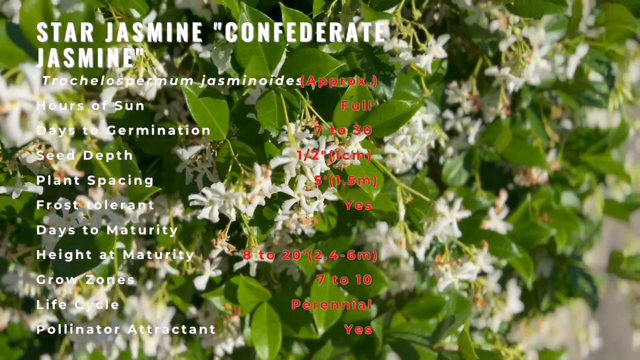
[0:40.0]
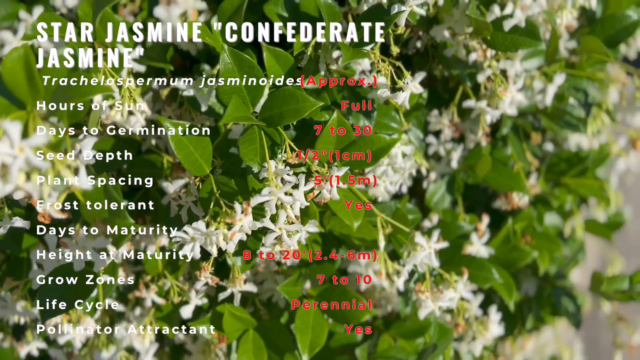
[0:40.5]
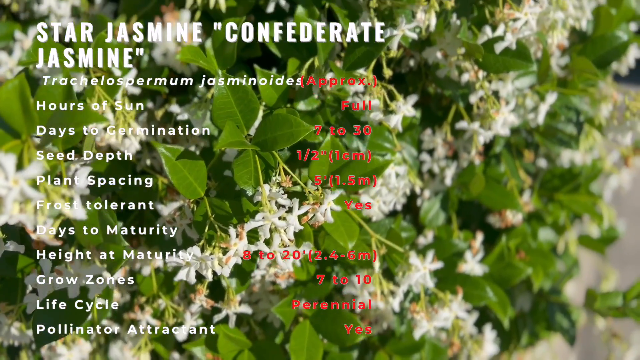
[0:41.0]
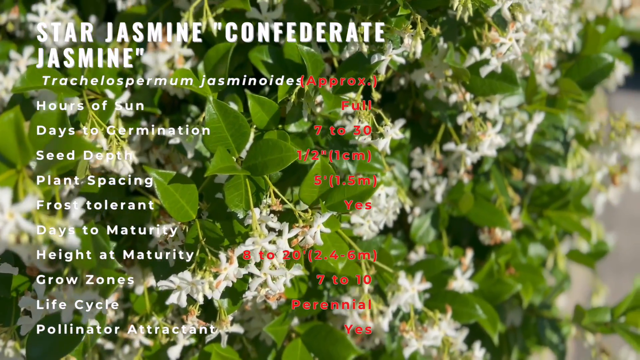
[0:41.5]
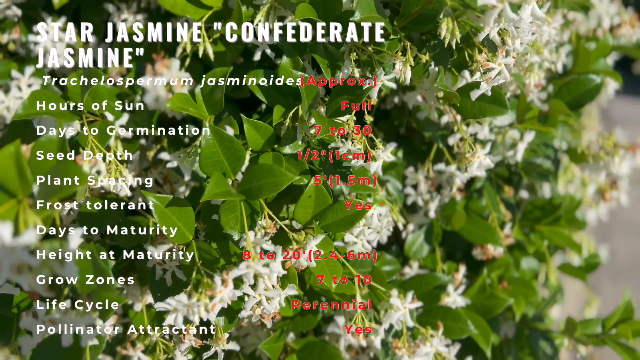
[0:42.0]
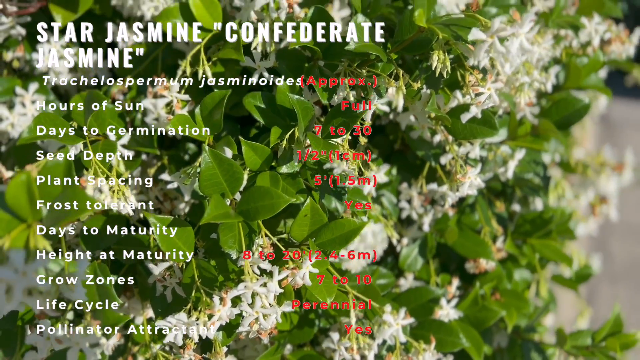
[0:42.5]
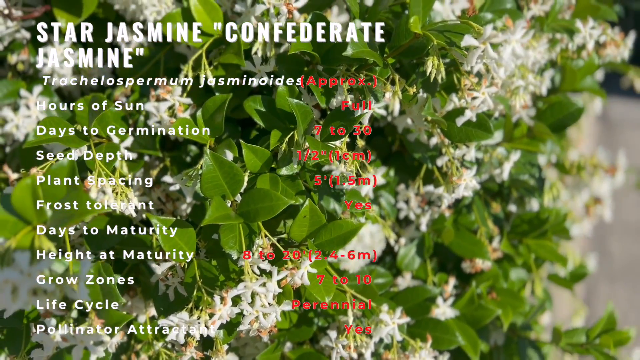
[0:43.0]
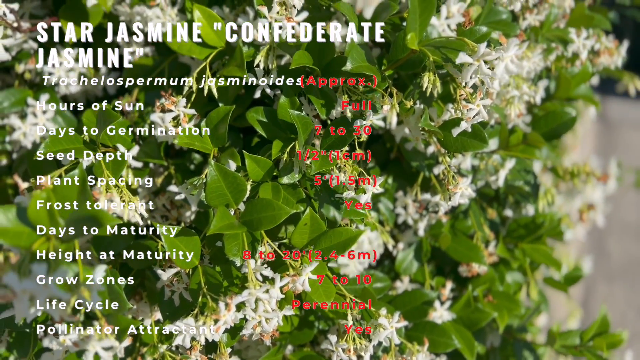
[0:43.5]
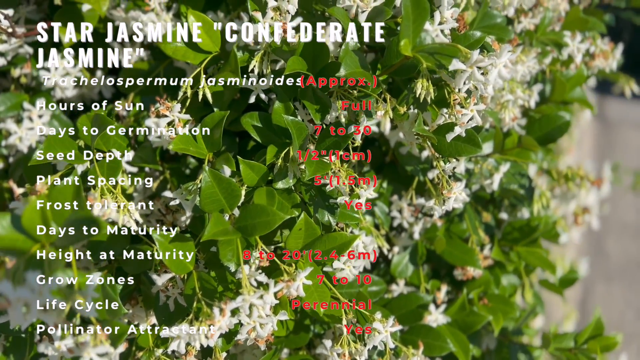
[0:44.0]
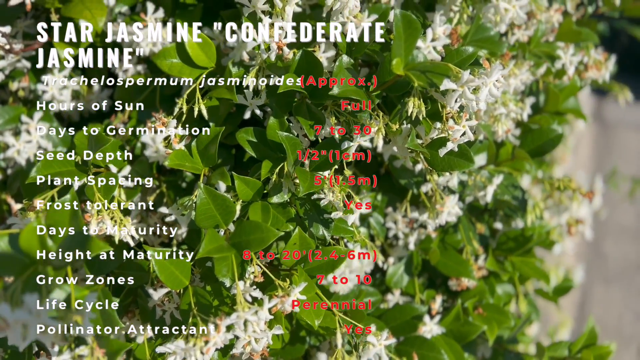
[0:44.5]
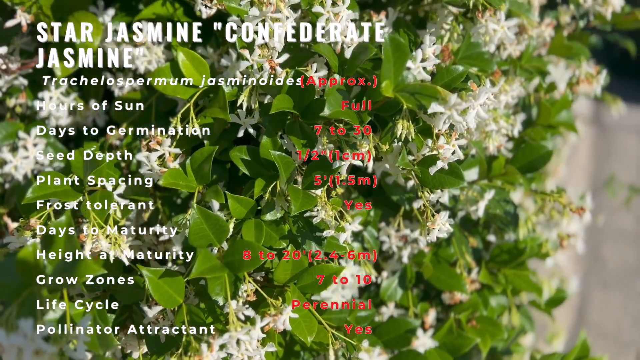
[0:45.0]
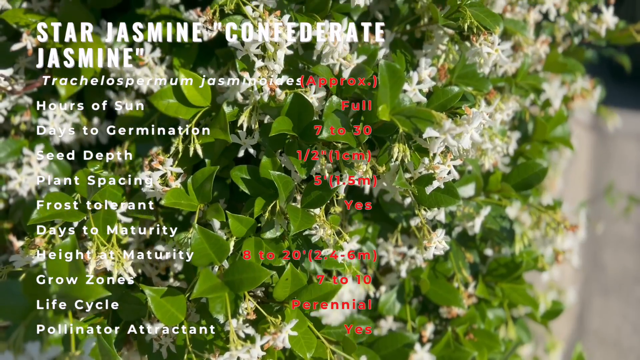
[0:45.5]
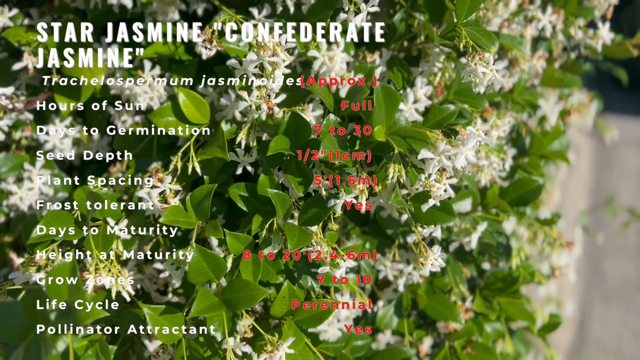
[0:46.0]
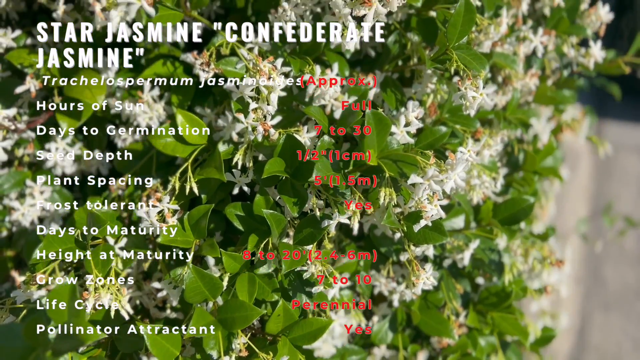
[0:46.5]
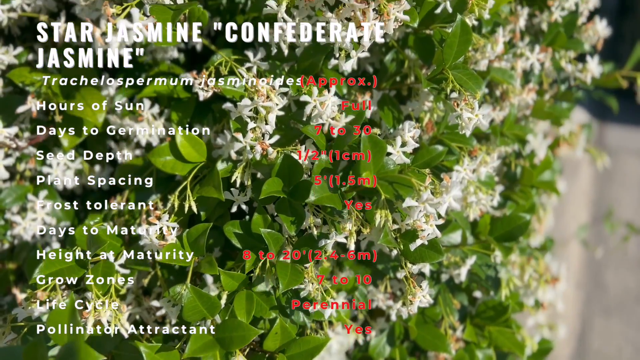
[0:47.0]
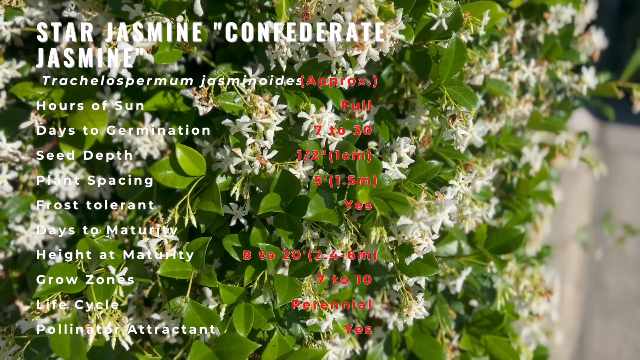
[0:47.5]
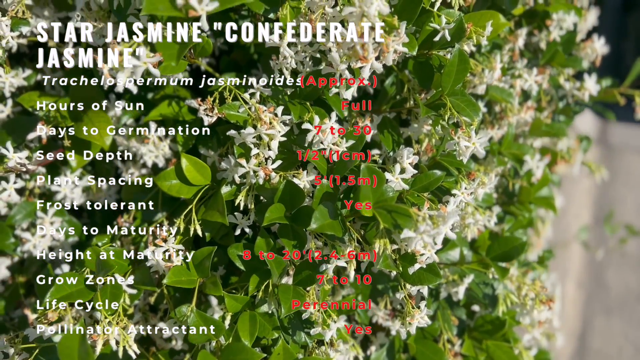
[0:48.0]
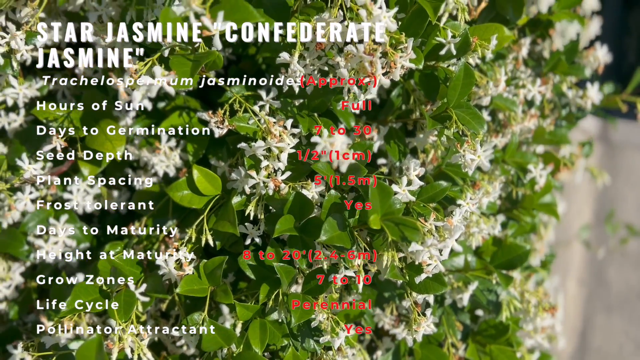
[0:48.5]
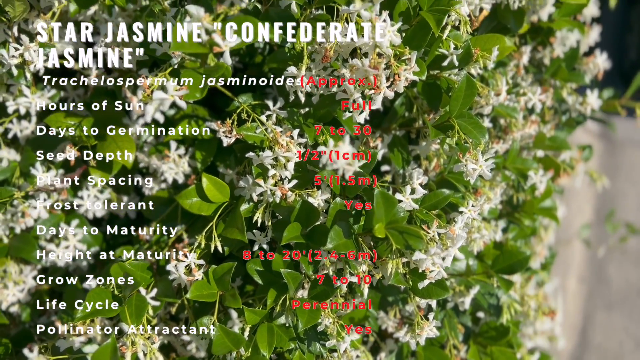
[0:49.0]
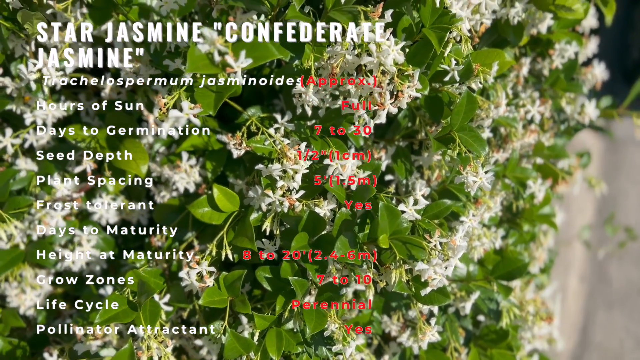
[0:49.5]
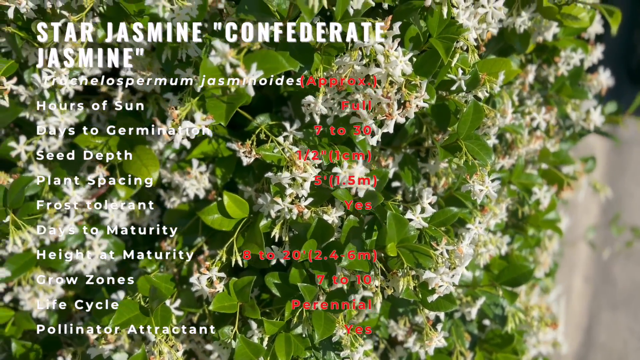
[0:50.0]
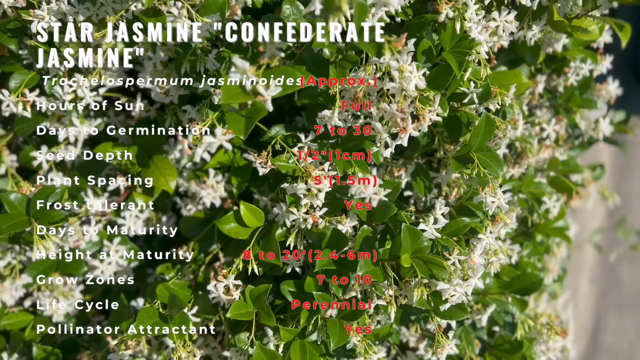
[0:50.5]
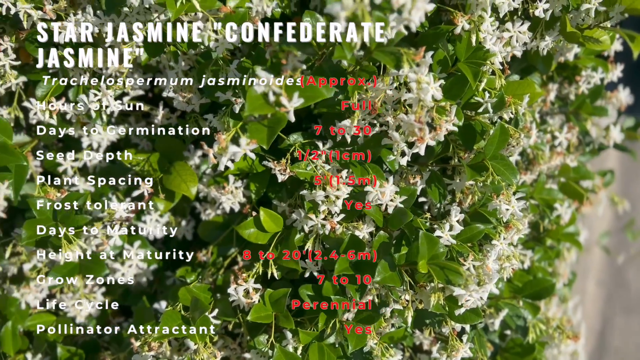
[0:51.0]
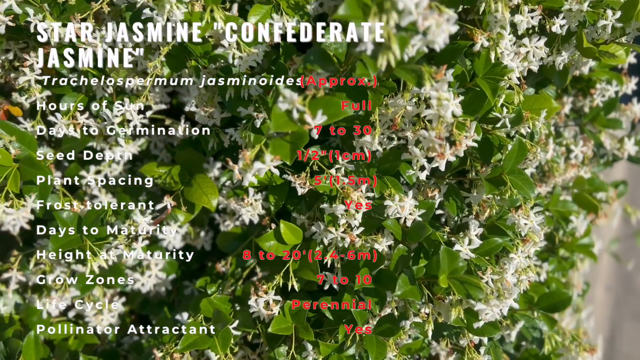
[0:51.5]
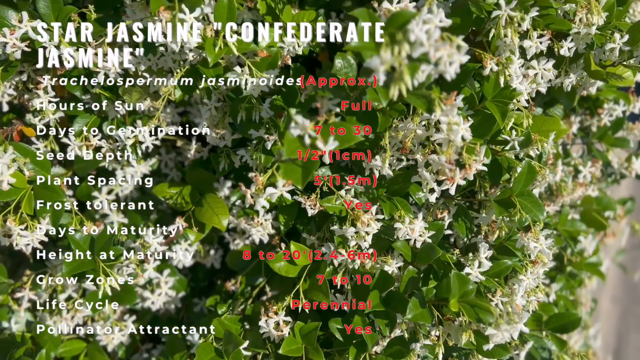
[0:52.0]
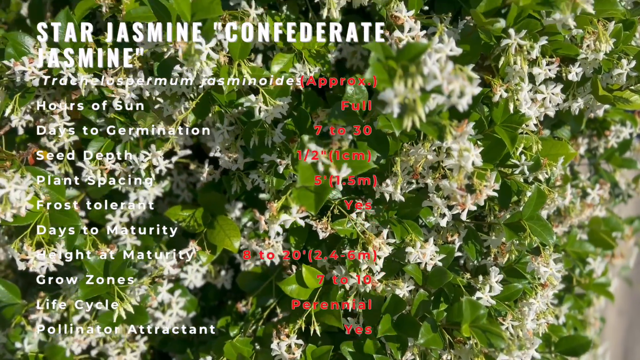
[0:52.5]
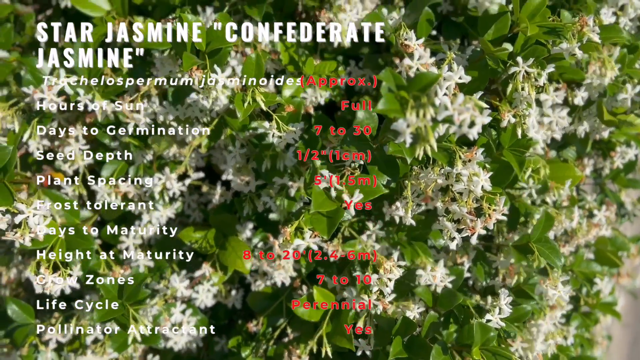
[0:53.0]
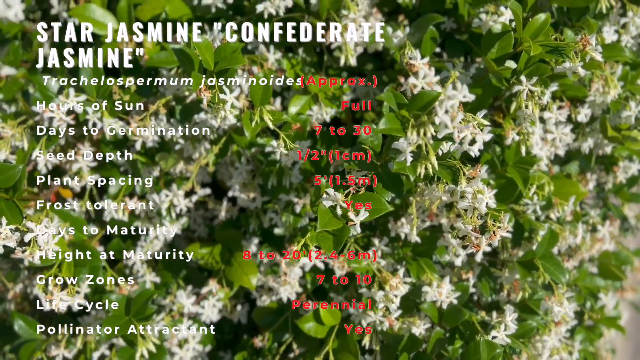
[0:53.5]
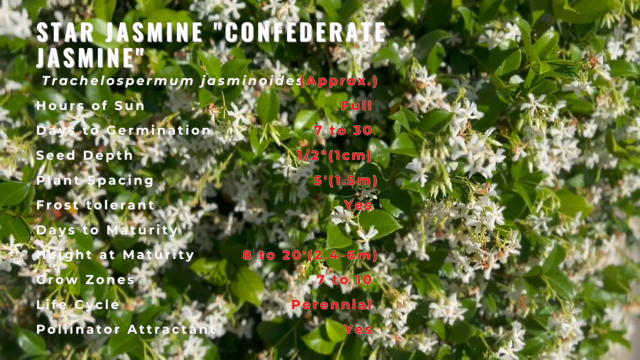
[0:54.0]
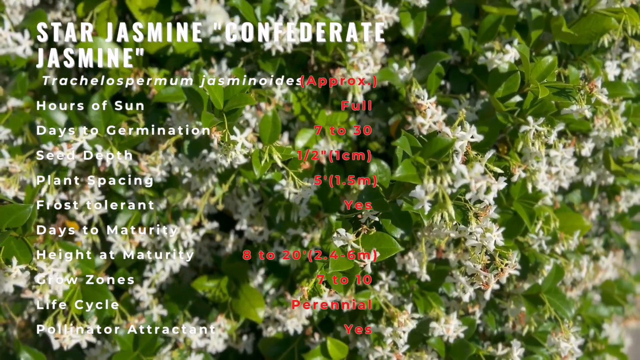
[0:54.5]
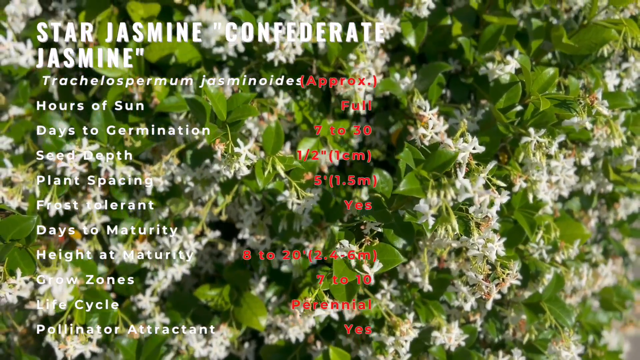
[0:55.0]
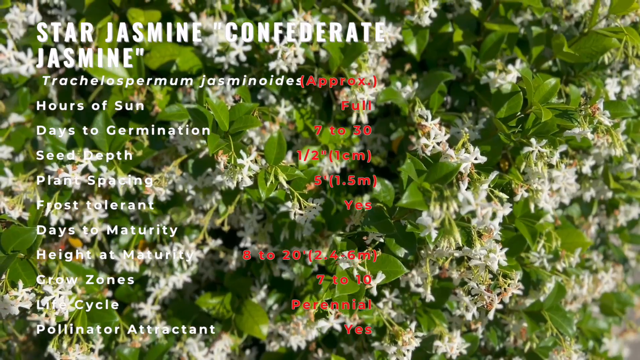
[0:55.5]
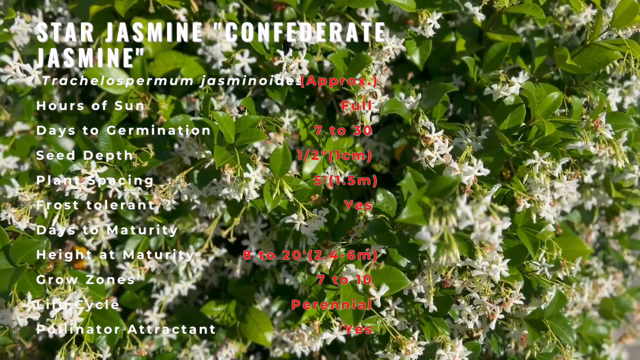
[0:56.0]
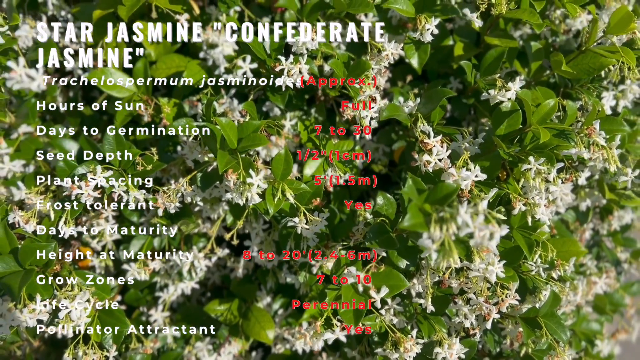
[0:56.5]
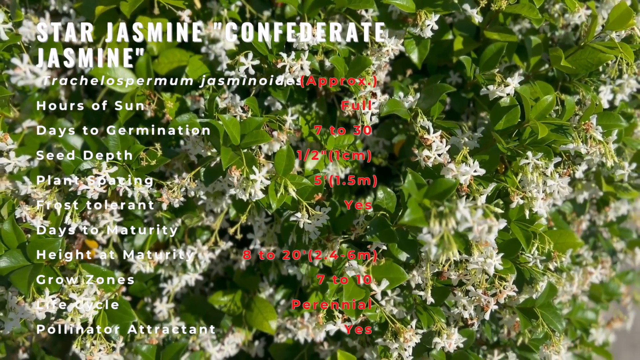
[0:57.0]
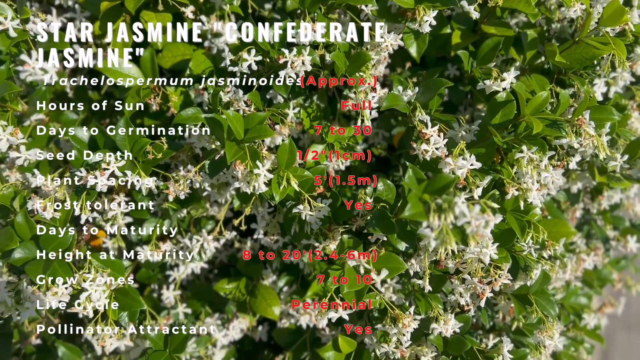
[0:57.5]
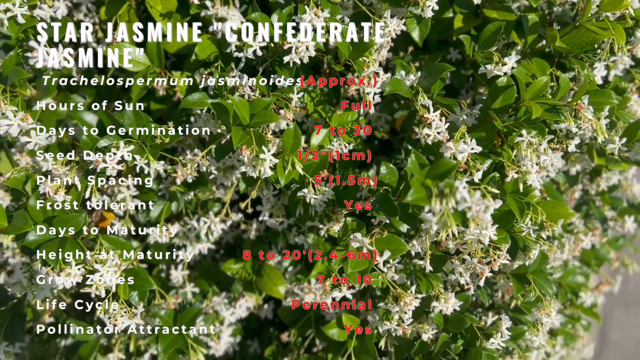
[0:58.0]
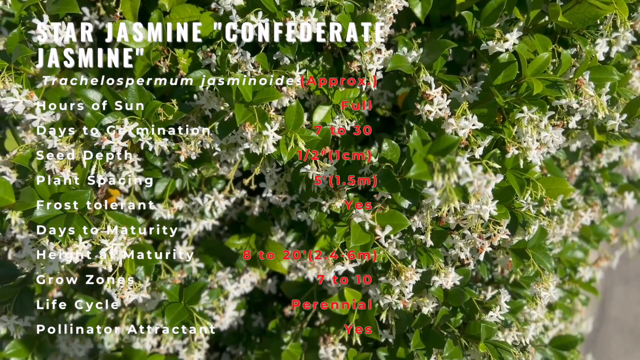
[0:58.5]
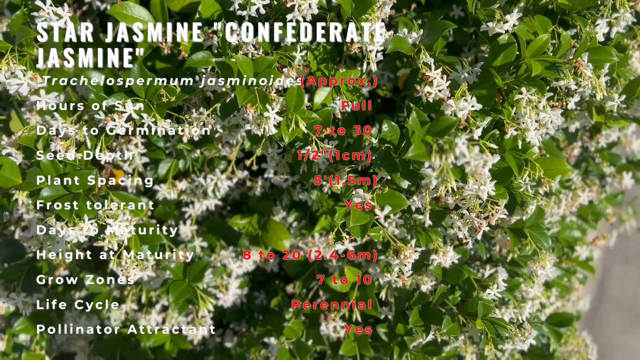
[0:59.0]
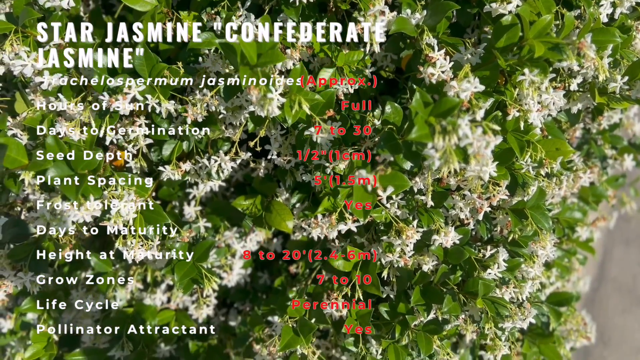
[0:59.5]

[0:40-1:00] The words "star jasmine" and "confederate jasmine" are still on screen. The view is from above the plant life, giving a glimpse of the plants.